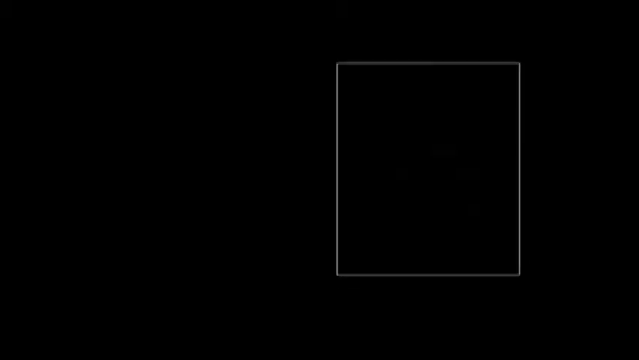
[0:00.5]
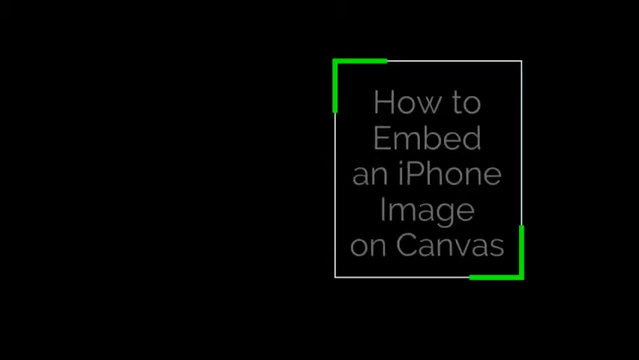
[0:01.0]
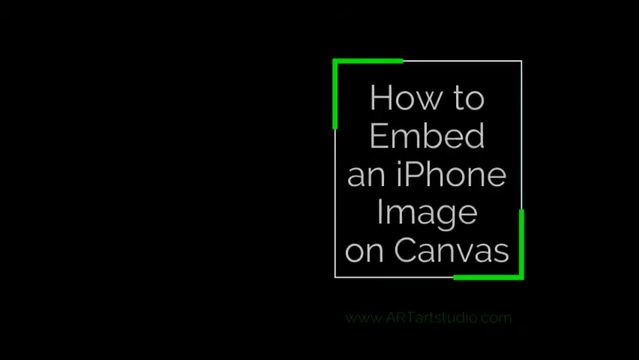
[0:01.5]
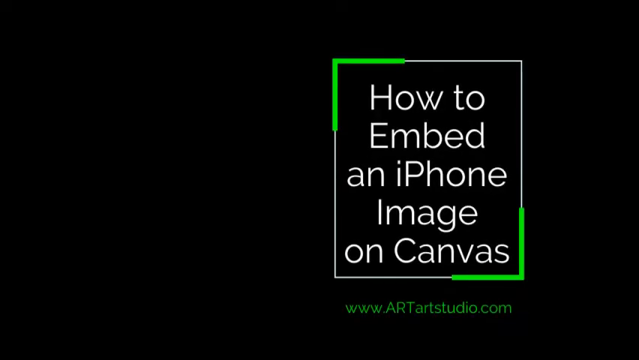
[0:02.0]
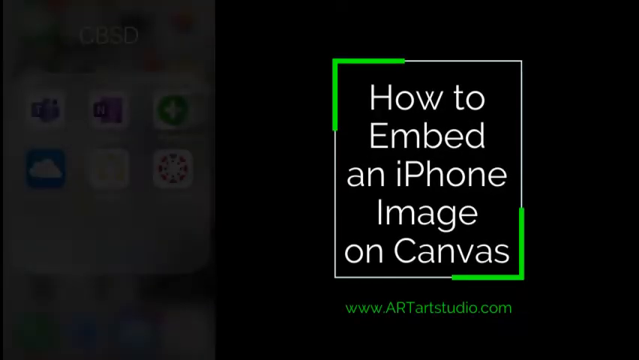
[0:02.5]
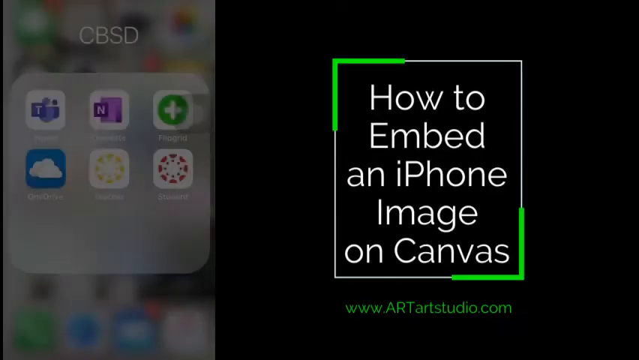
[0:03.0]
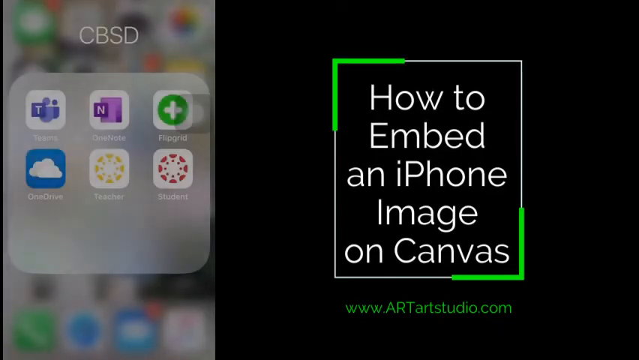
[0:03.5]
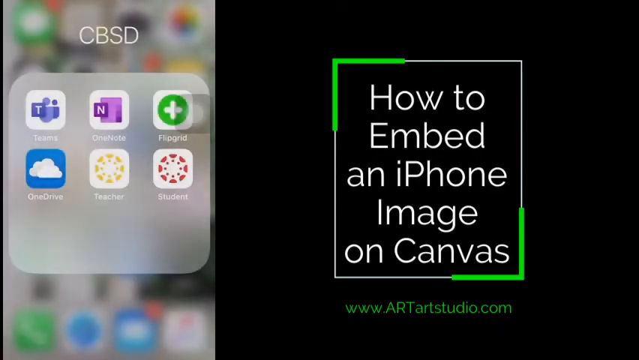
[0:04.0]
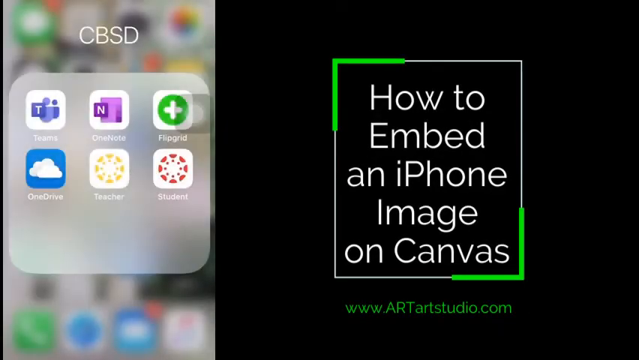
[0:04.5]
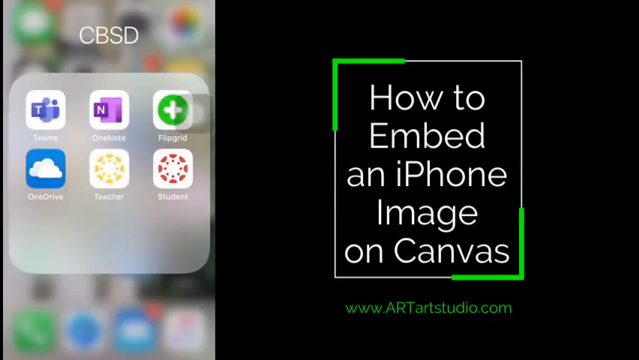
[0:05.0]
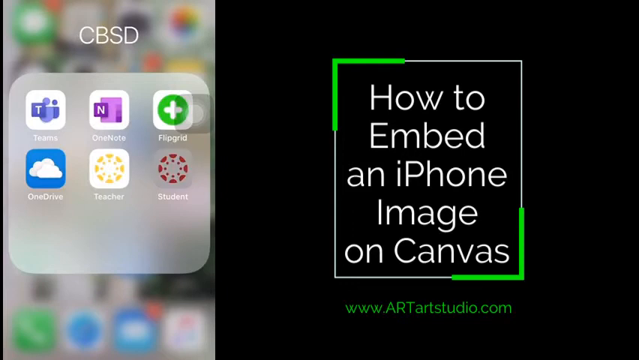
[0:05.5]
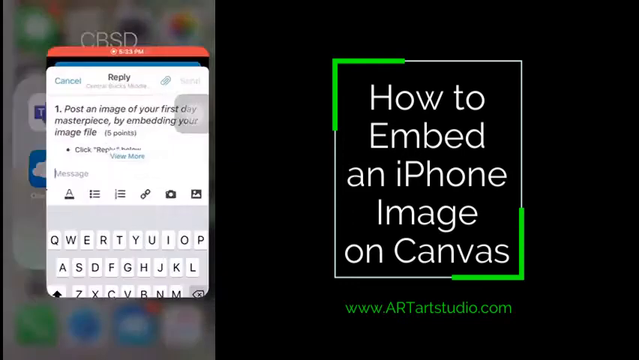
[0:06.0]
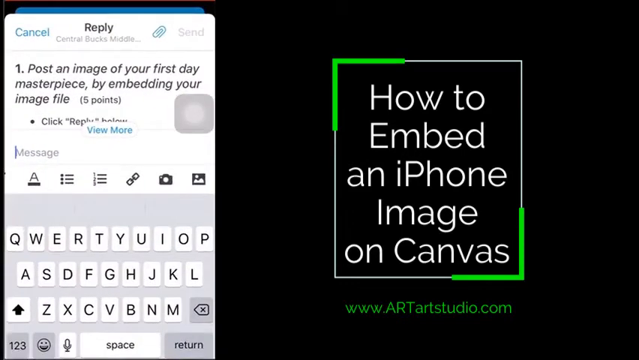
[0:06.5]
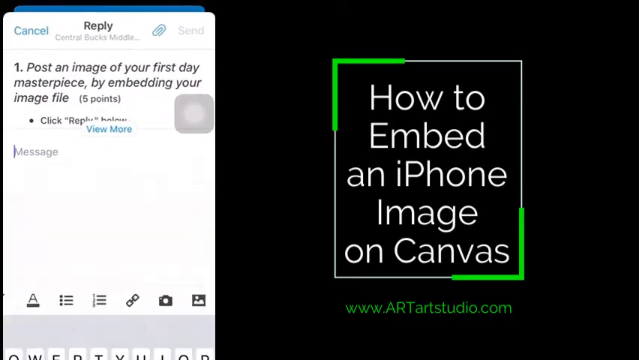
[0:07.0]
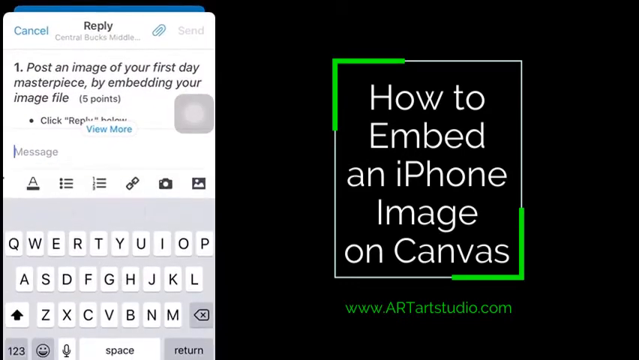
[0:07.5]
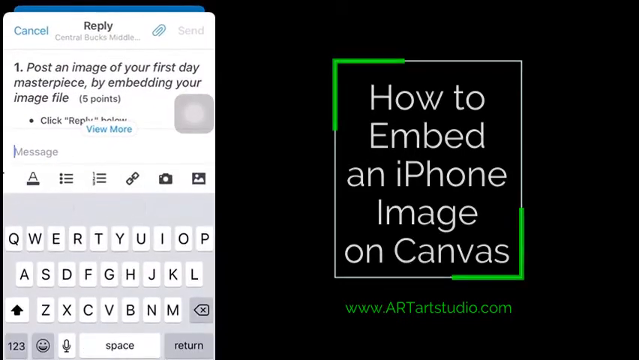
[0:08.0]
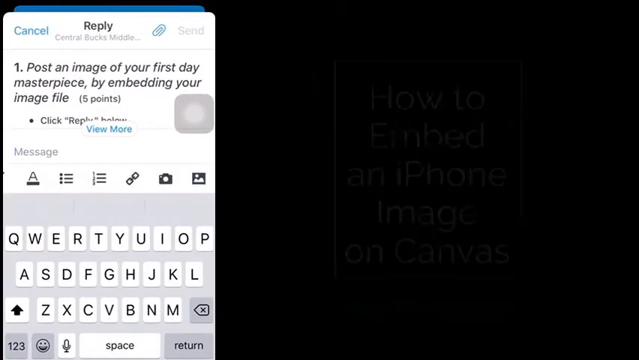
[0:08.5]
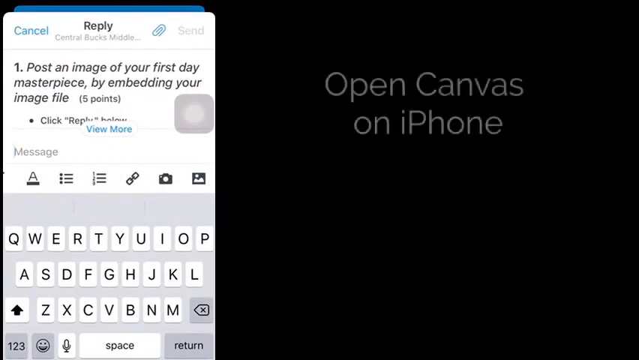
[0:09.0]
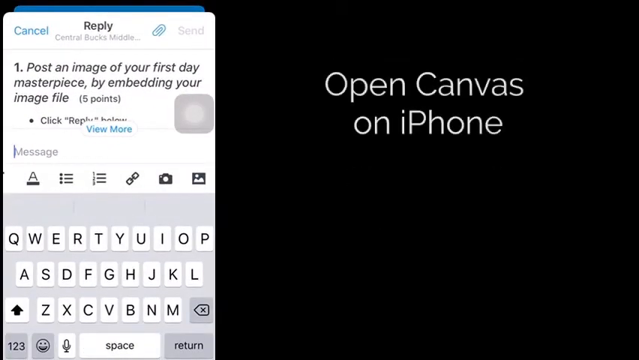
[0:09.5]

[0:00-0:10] The video starts on a black screen. On the right side, a graphic appears with a lime green border at the top left and bottom right corners; the rest of the border is white against the black background. Inside the border is the text "how to embed an iPhone image on canvas", and below the box, in light green font, is "www.ARTartstudio.com". The left side of the screen then opens up as if it were a mobile phone screen, with blurred images of apps. A pop-up appears as on a mobile phone screen, with the letters "c b s d" above the window. Inside the pop-up are two lines of apps: Teams, OneNote, Flipgrid, OneDrive, Teacher and Student. Student is clicked, which opens another screen.